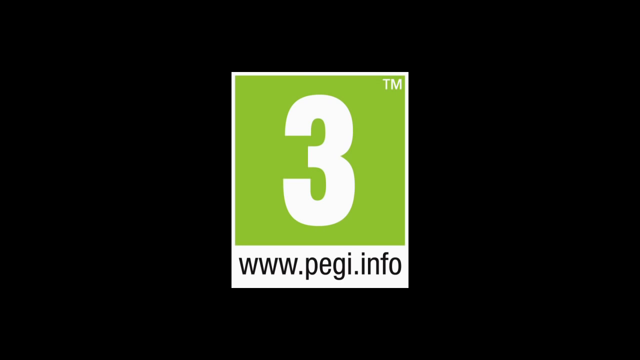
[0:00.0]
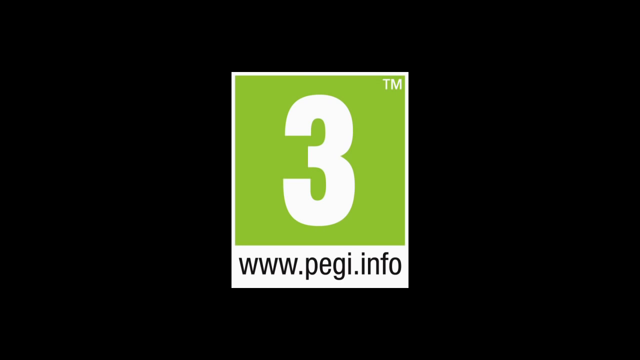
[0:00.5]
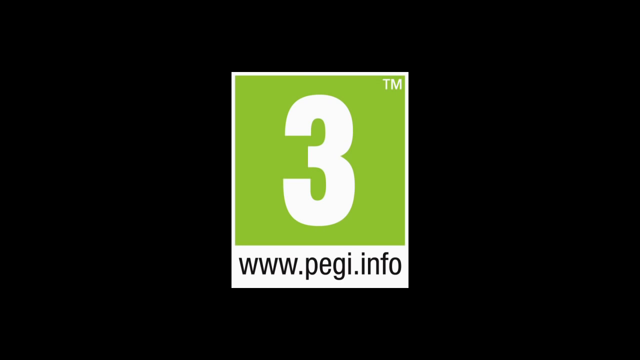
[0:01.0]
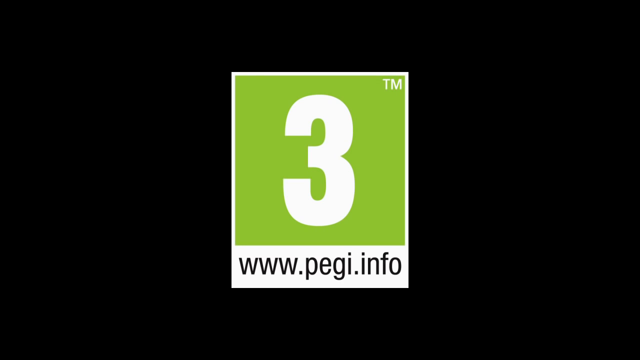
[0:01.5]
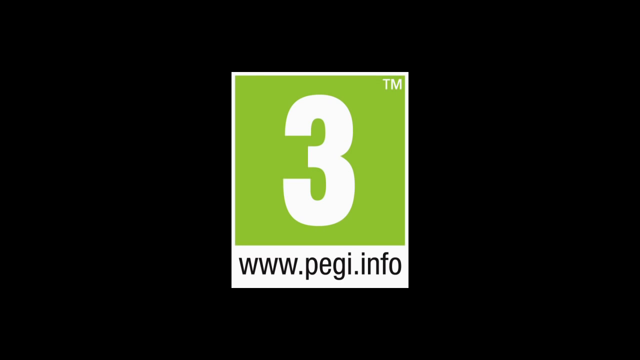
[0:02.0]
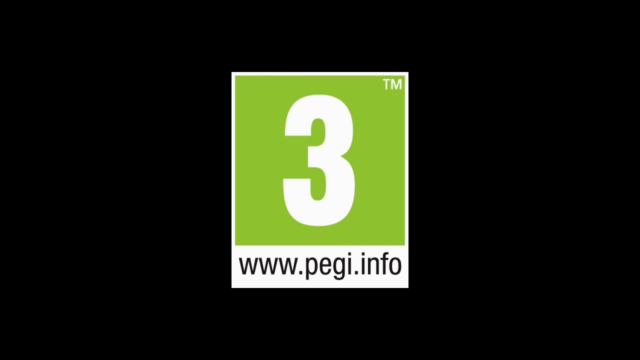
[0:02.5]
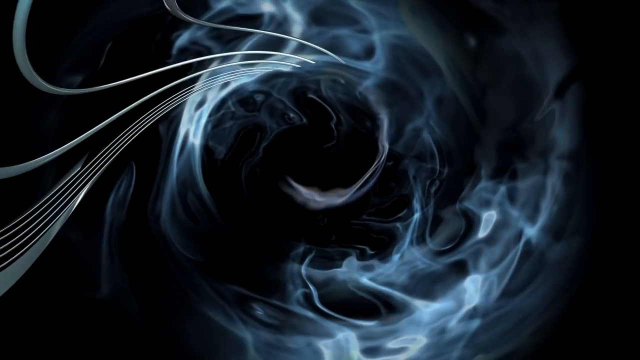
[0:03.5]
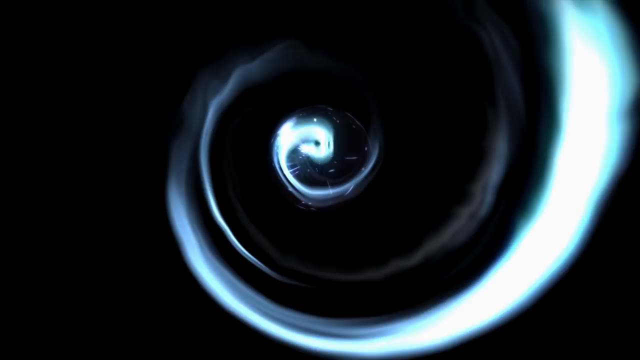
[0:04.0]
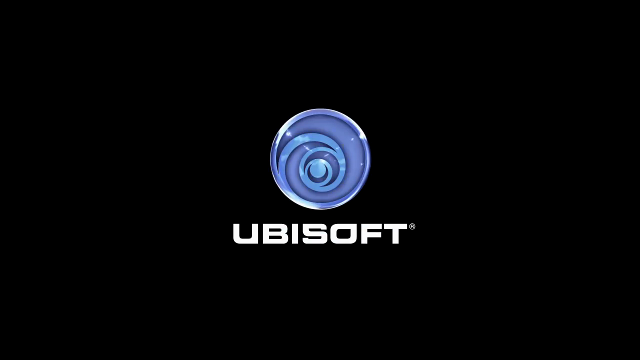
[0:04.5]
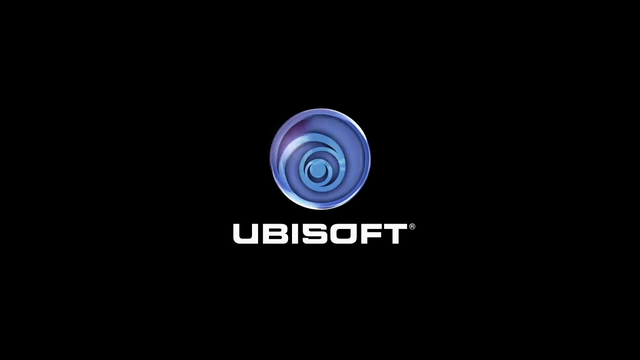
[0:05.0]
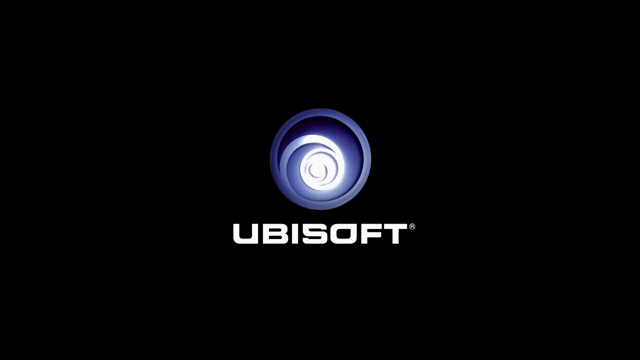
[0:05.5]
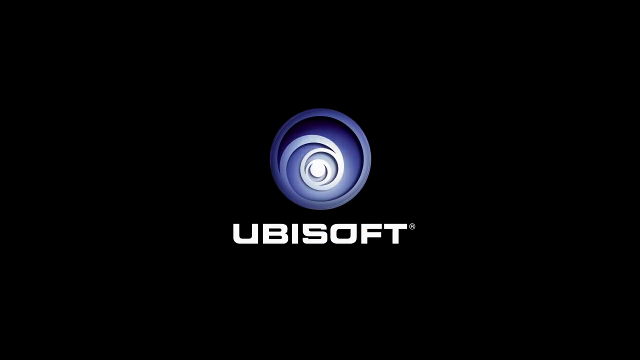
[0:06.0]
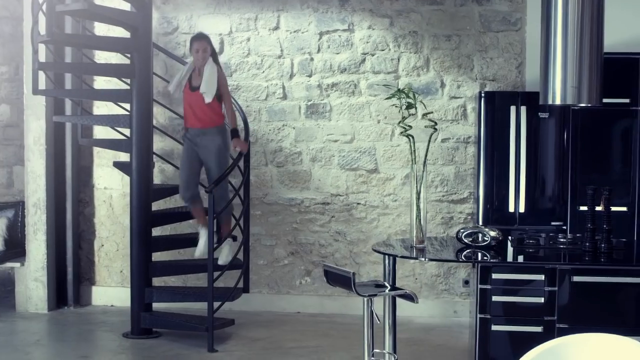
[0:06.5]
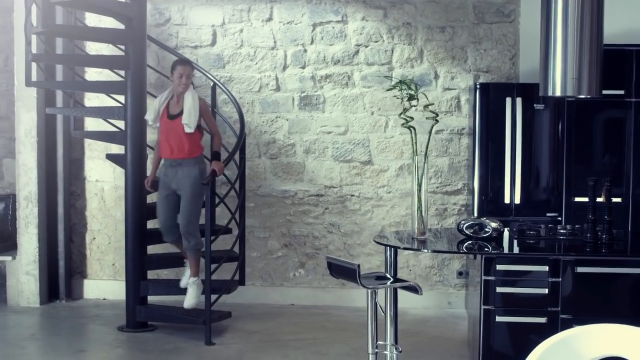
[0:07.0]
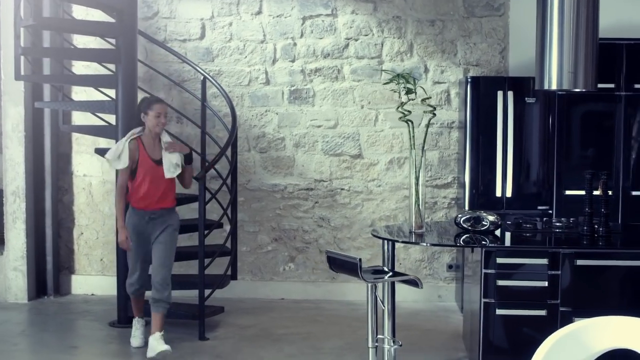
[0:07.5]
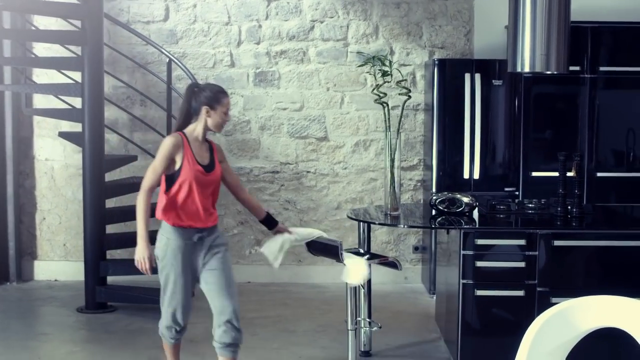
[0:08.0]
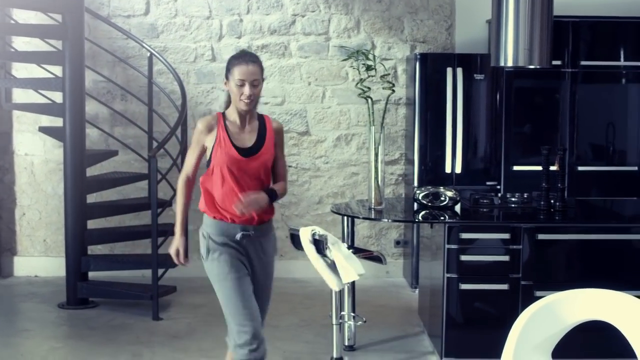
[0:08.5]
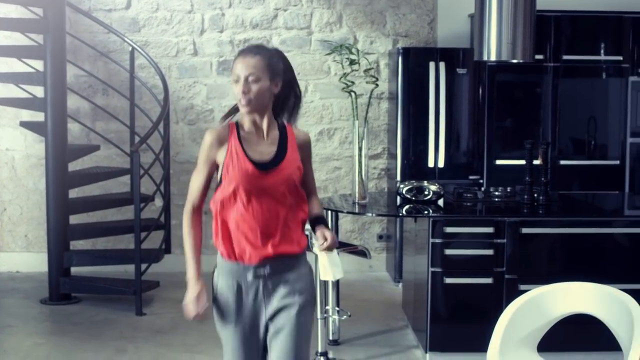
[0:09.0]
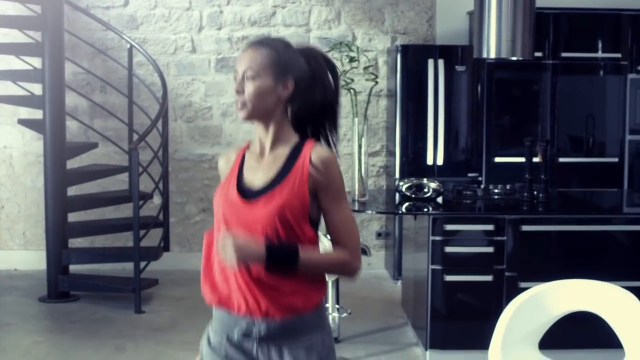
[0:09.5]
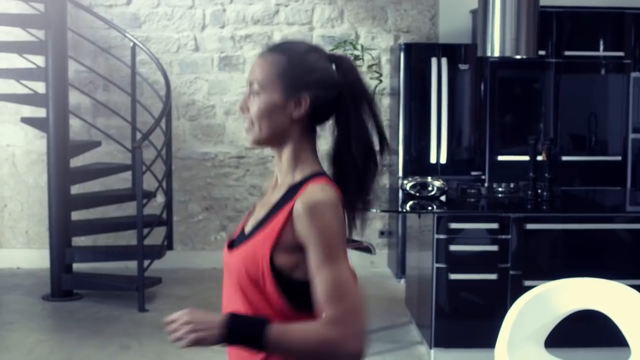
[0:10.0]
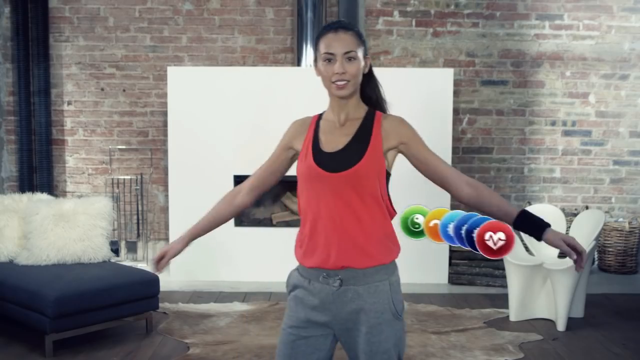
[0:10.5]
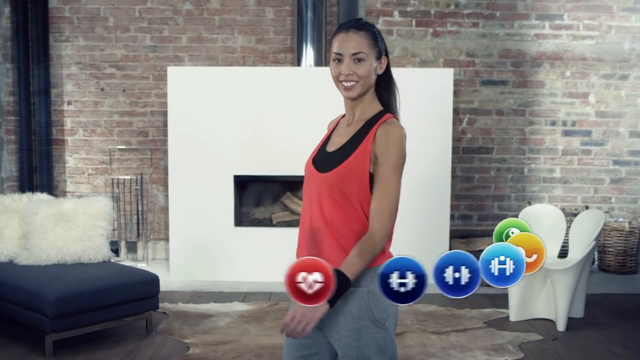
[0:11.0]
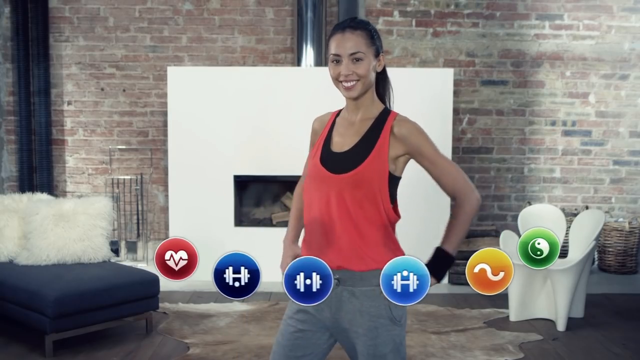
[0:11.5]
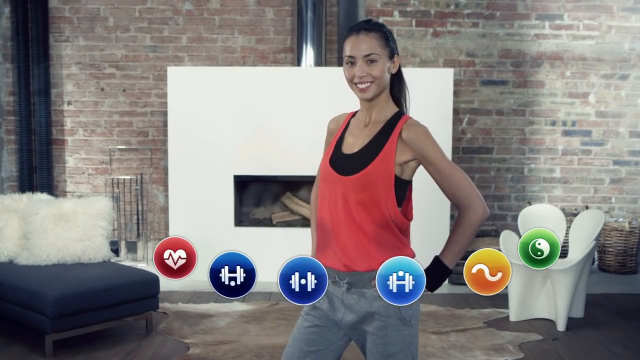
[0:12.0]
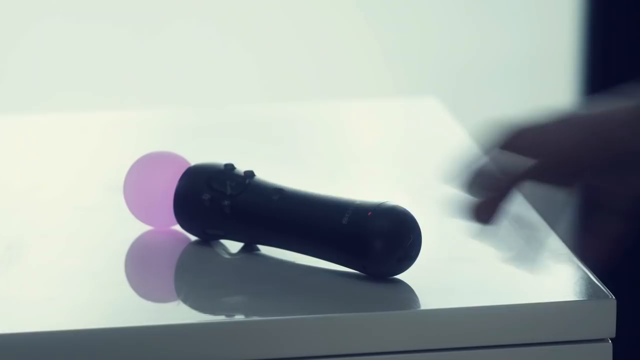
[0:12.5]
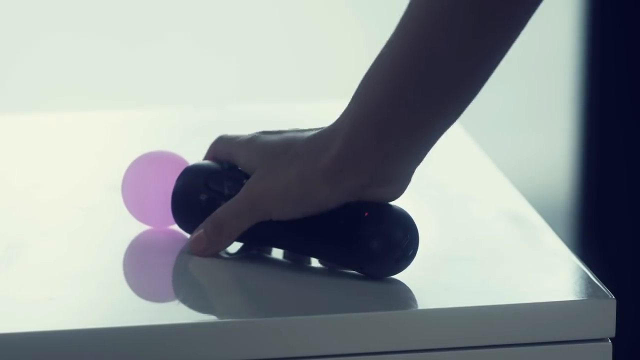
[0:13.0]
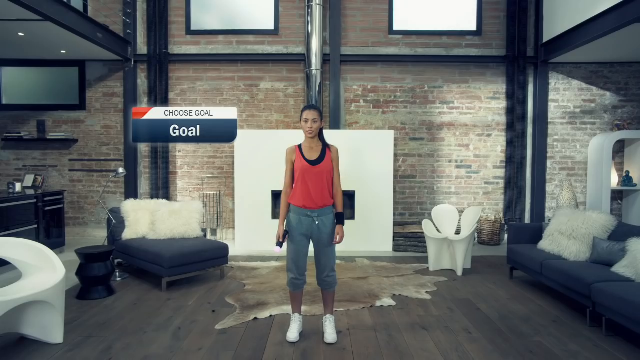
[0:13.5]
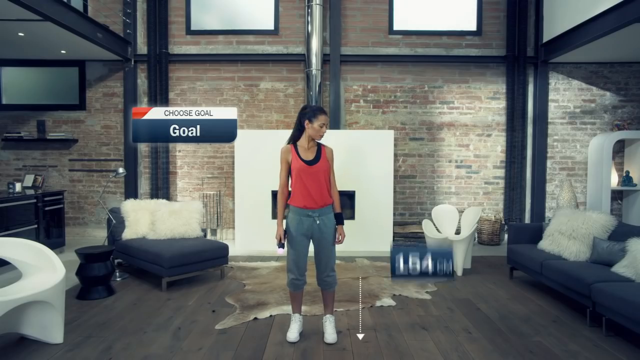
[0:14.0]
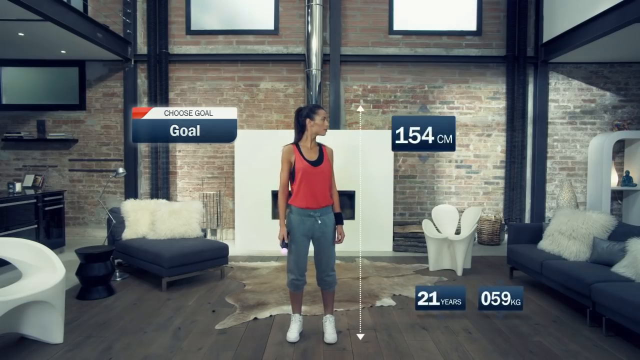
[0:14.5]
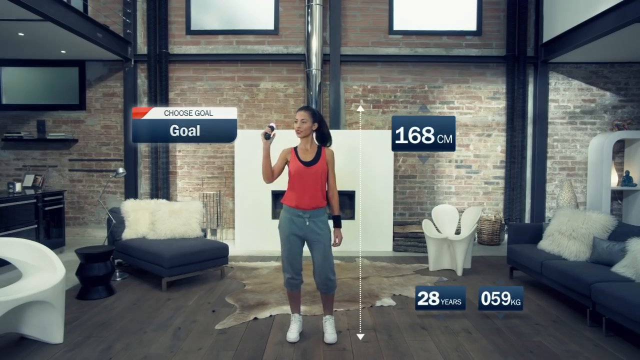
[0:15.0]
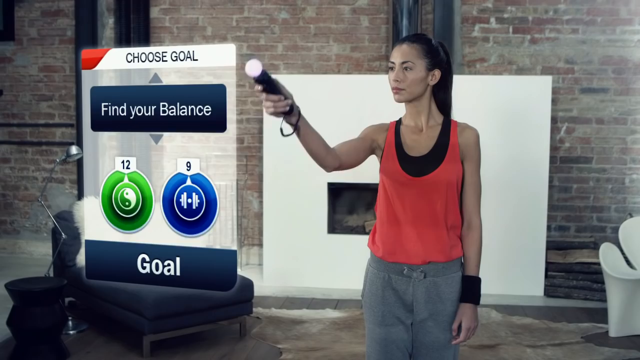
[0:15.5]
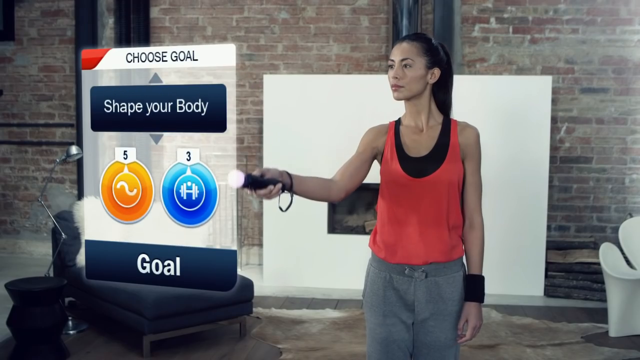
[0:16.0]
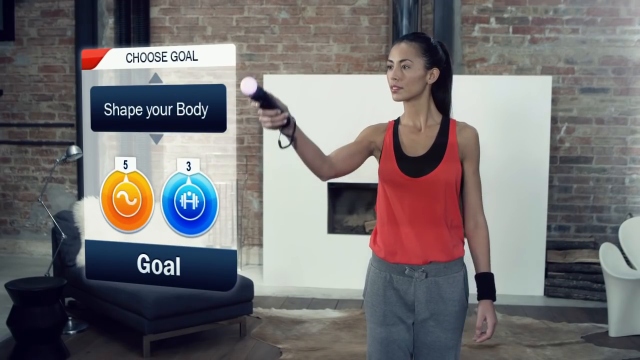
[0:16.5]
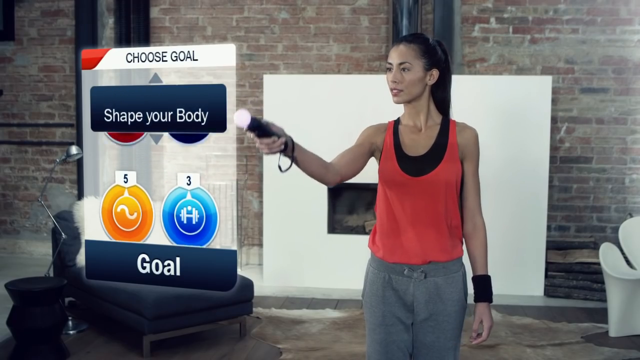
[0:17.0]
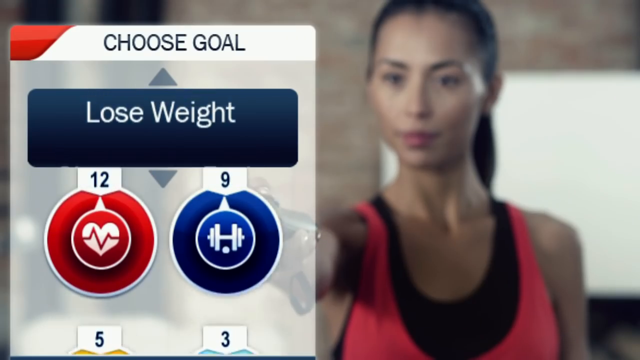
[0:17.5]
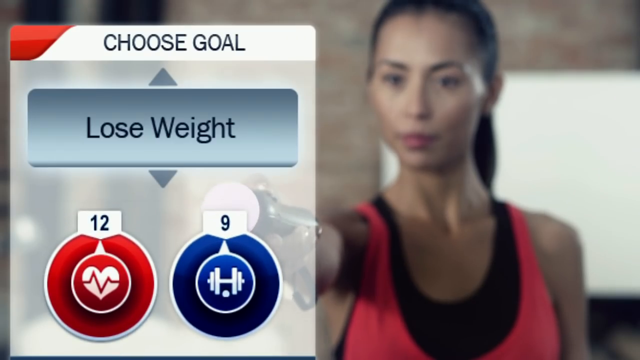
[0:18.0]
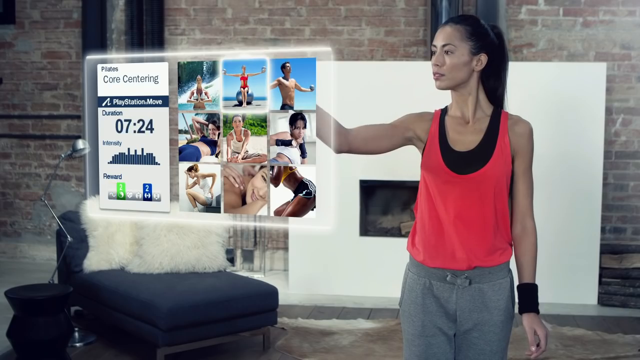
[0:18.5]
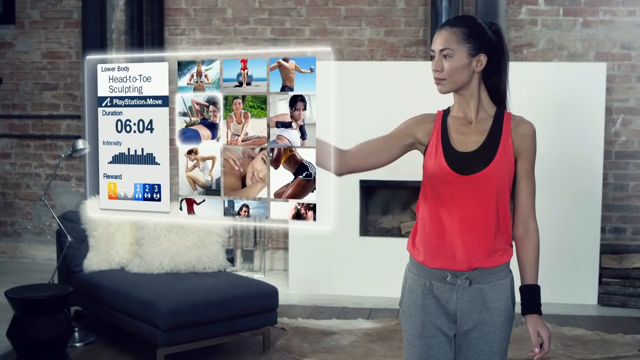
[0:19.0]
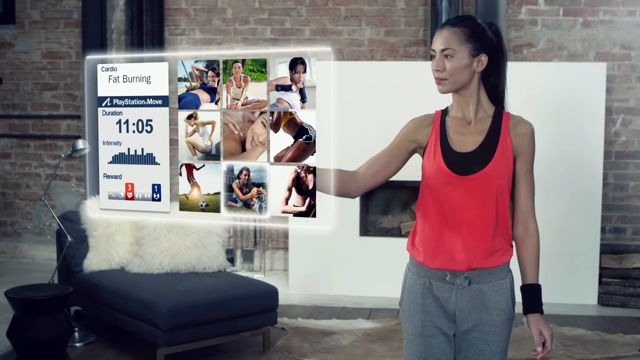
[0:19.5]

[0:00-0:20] A black screen shows a green square with a large white number three inside, and underneath it in black is "www.pegi.info". White, smoky, spiral lines sort of spin in a circle and form a circle logo with "Ubisoft" underneath. A woman in exercise clothing walks down a spiral set of stairs. She takes the towel wrapped around her neck and places it on a stool chair, then runs to the middle of the room, where she sort of waves her arms around and what look like different icons float in front of her. One sort of looks like a heart with EKG lines in it, a few look like various weights such as dumbbells, another has a squiggly line, and another has a yin yang in it. The woman picks up a controller with a long black handle and a pink circle ball at the top. She then stands in a living room; on the left side of the screen a box comes up that says "choose goal", and on the right side another box says "169 centimeters". She raises the controller into the air and drags it down over the choose goal box, which expands with different goal options. She swipes through a few options, such as "find your balance", "shape your body" and "lose weight", and clicks on the lose weight option. A small rectangular screen pops up with a panel on the left that says "balance body" and, on the right, a three-by-three photo grid in which each square has a picture of someone doing an exercise. The woman sort of goes across one of the rows, scrolls down, moves to the middle picture of the bottom row and selects it, and the picture enlarges on the screen.